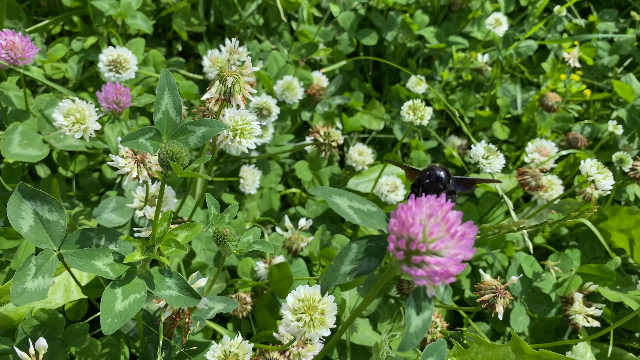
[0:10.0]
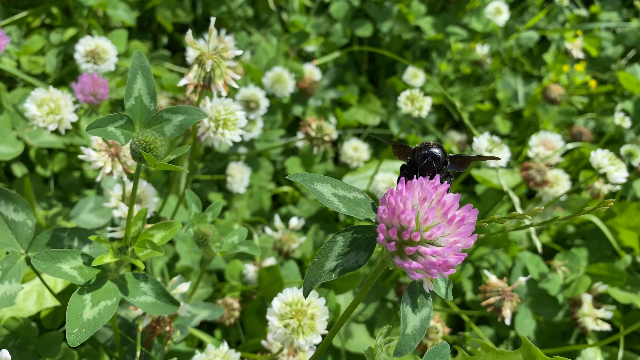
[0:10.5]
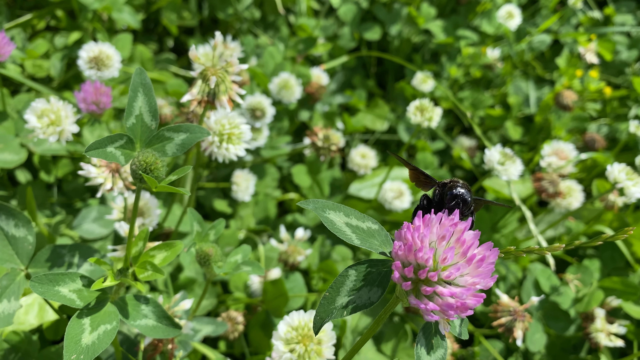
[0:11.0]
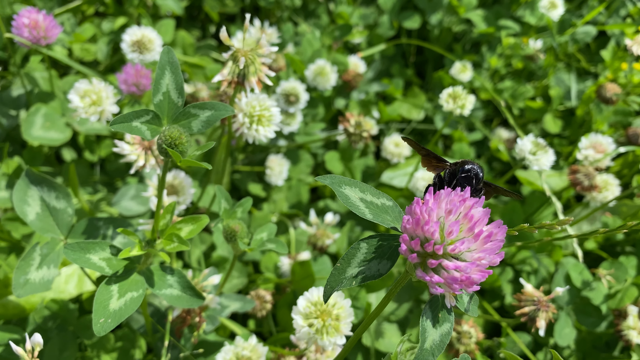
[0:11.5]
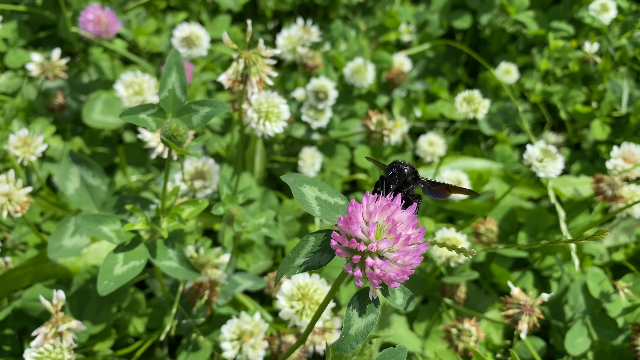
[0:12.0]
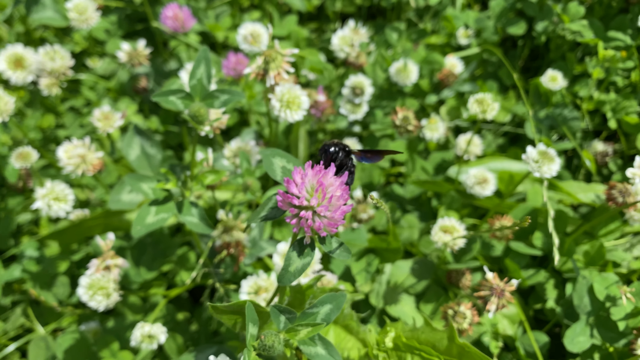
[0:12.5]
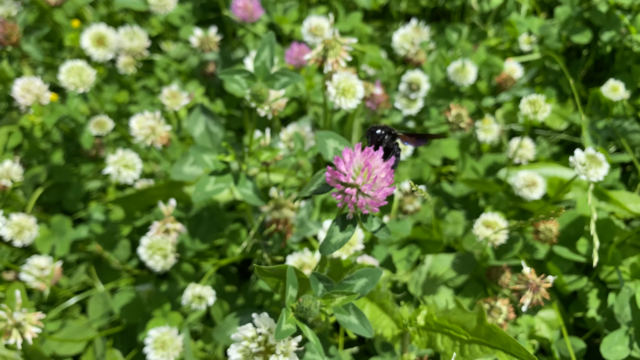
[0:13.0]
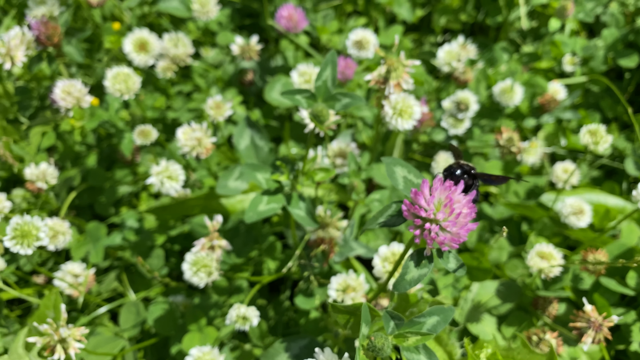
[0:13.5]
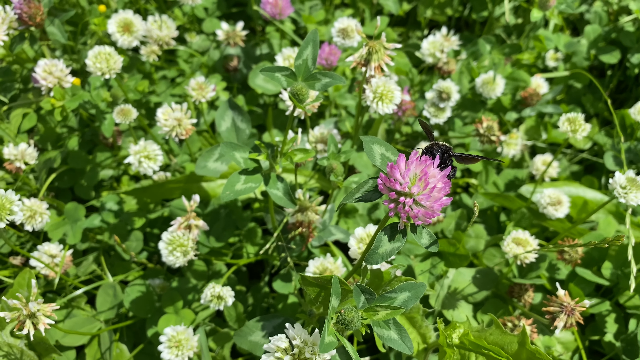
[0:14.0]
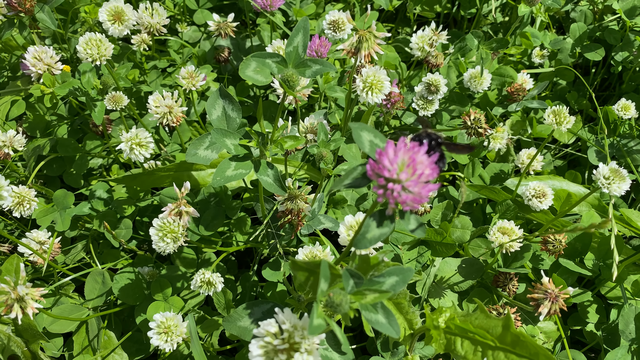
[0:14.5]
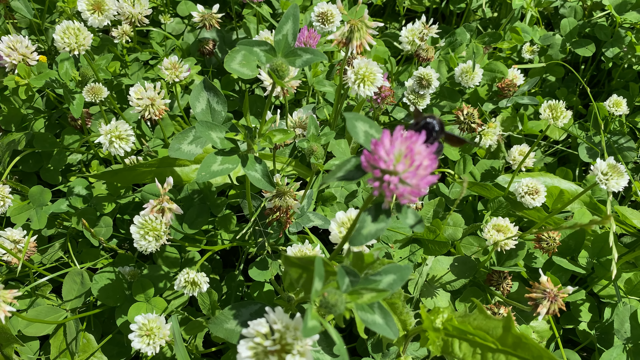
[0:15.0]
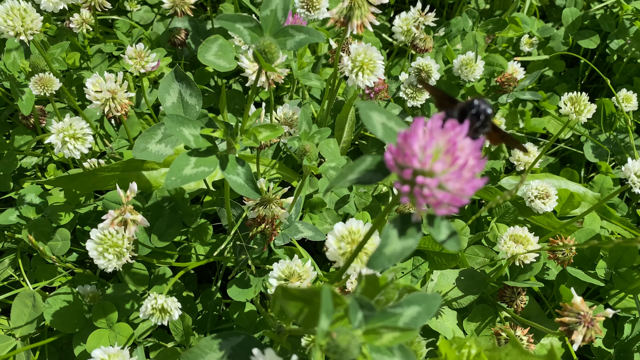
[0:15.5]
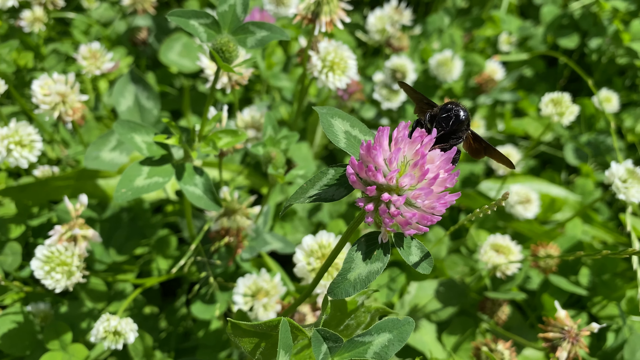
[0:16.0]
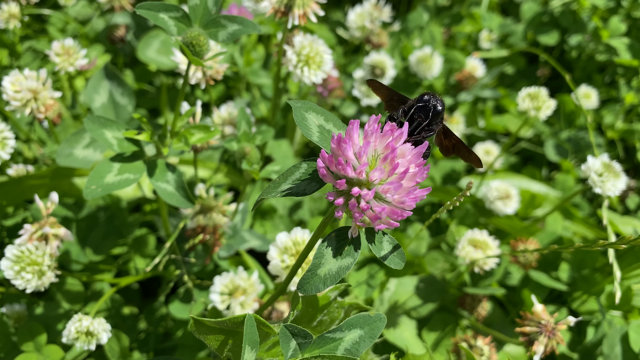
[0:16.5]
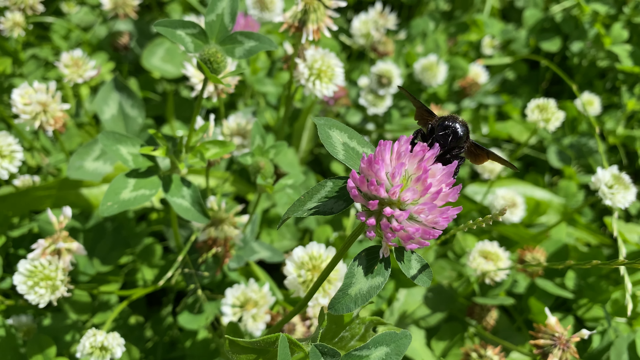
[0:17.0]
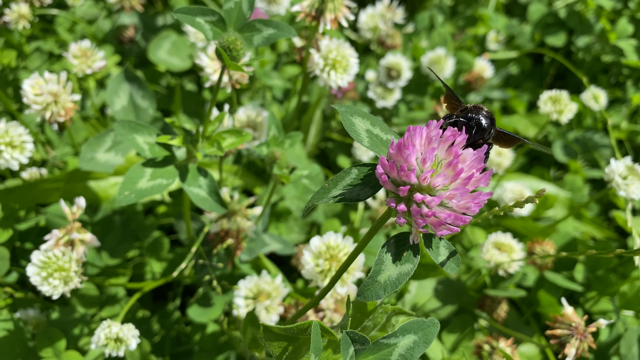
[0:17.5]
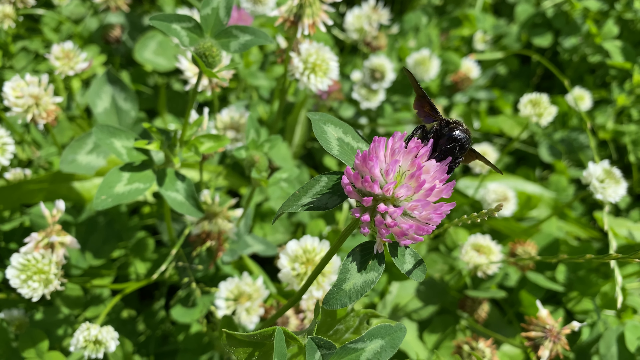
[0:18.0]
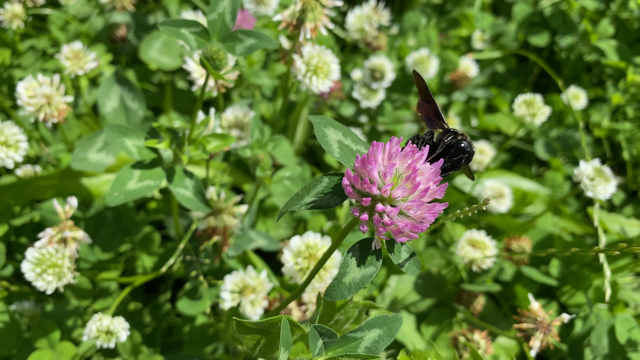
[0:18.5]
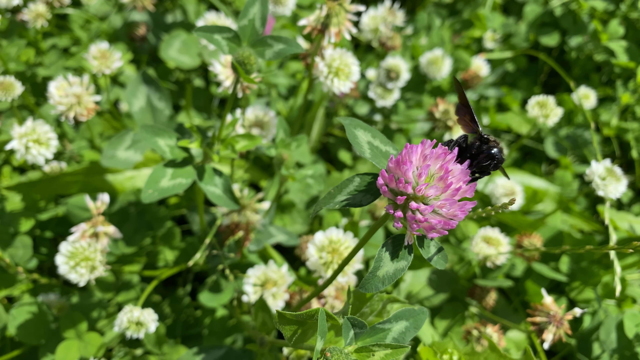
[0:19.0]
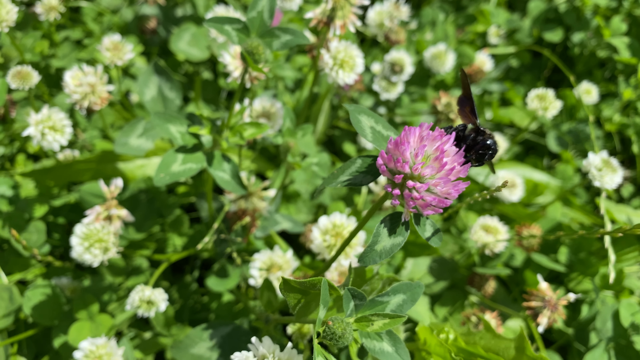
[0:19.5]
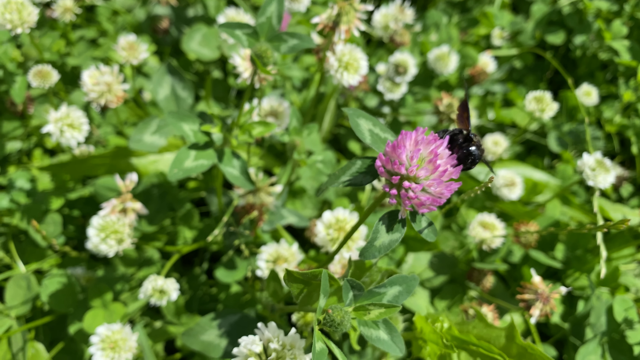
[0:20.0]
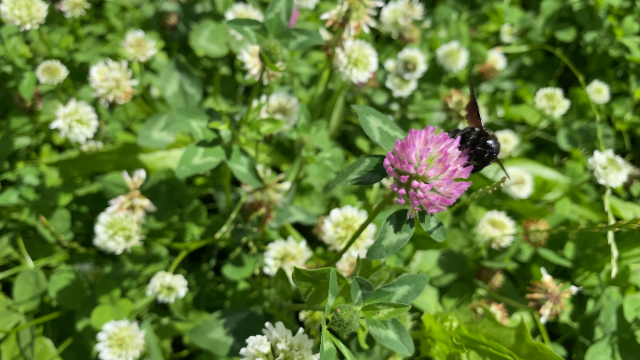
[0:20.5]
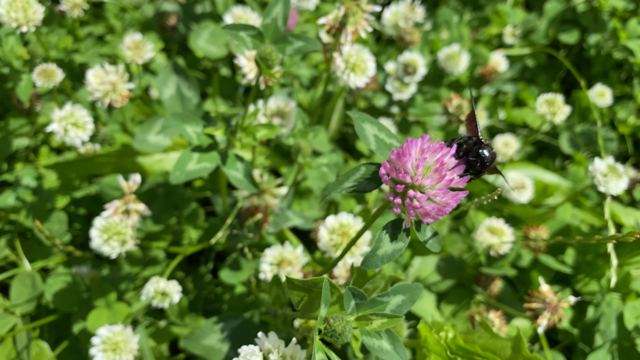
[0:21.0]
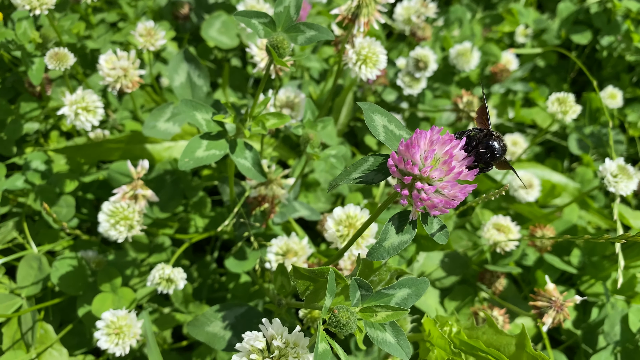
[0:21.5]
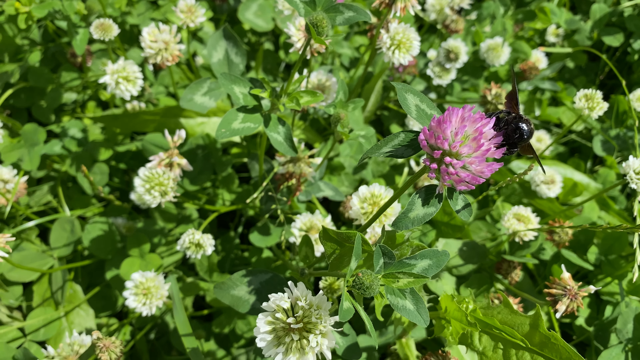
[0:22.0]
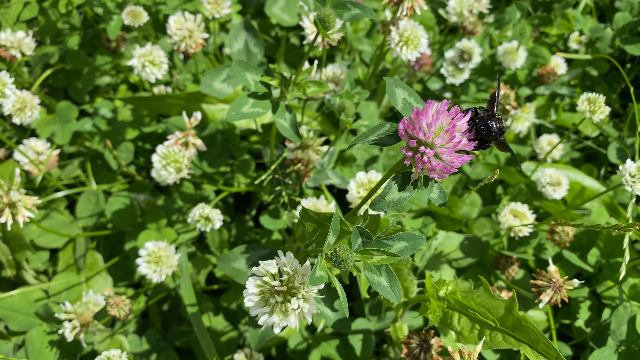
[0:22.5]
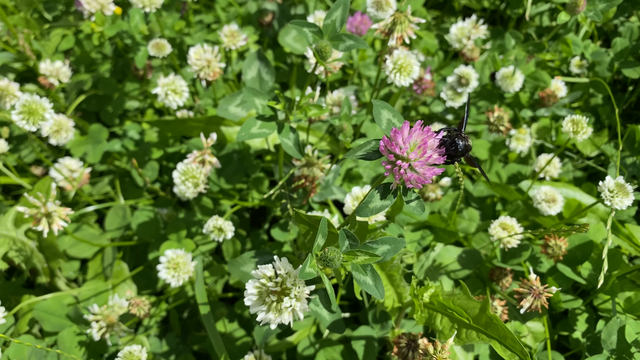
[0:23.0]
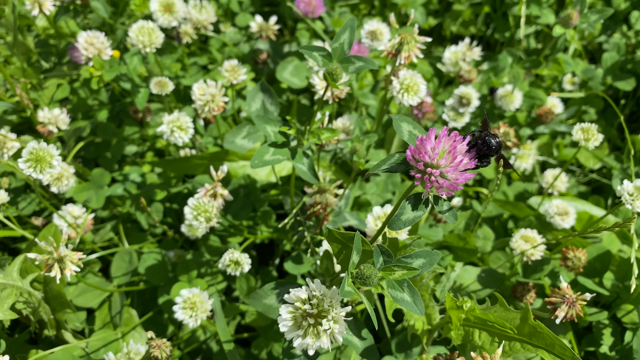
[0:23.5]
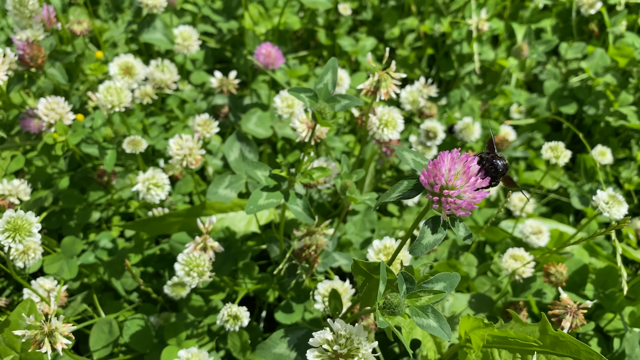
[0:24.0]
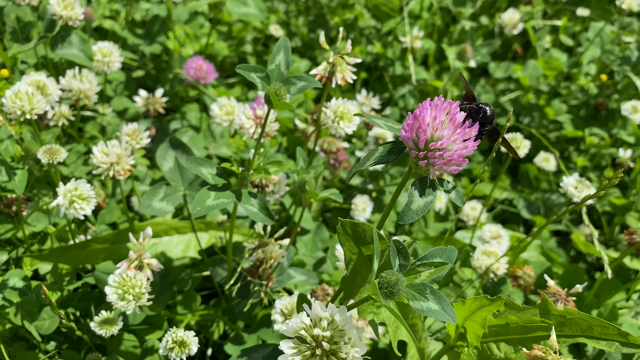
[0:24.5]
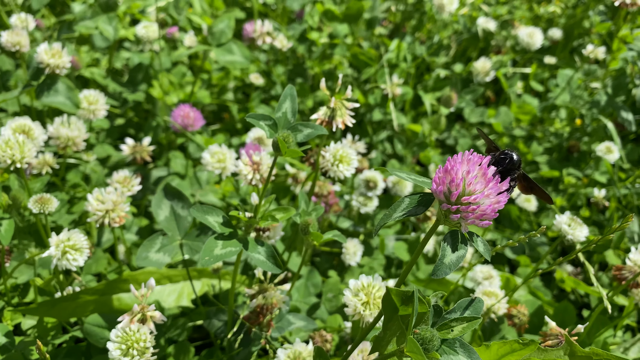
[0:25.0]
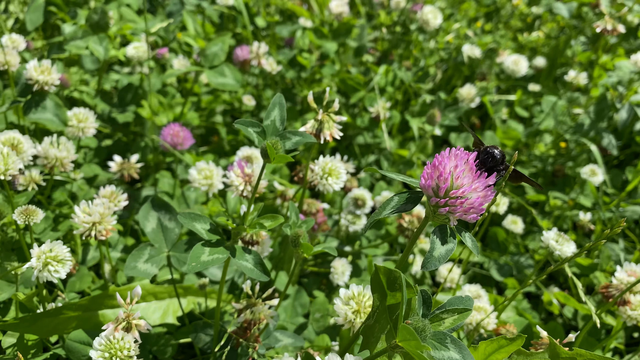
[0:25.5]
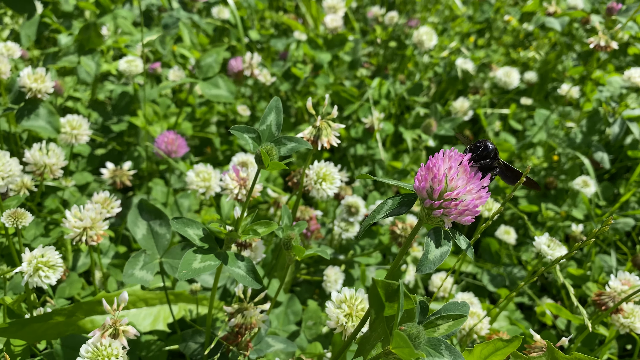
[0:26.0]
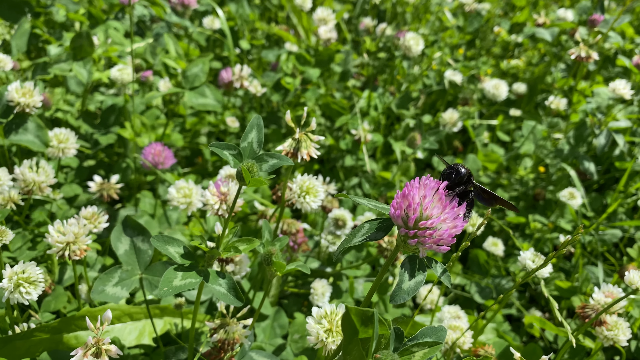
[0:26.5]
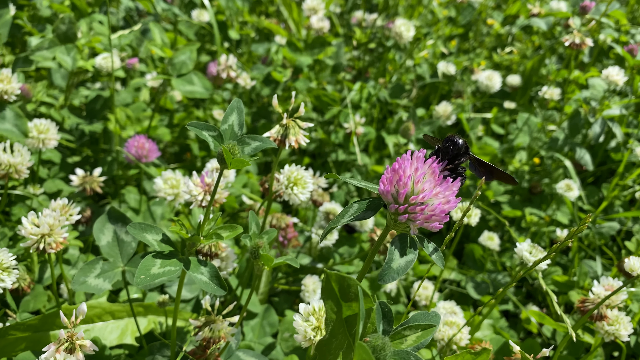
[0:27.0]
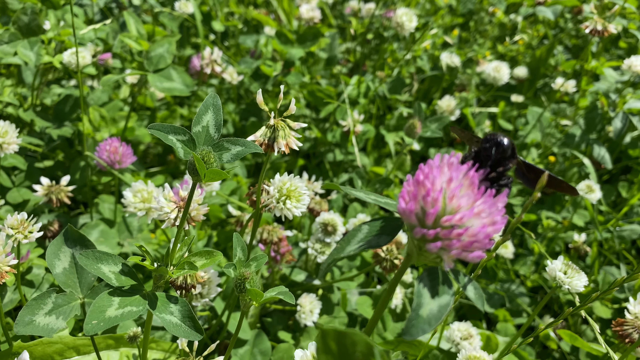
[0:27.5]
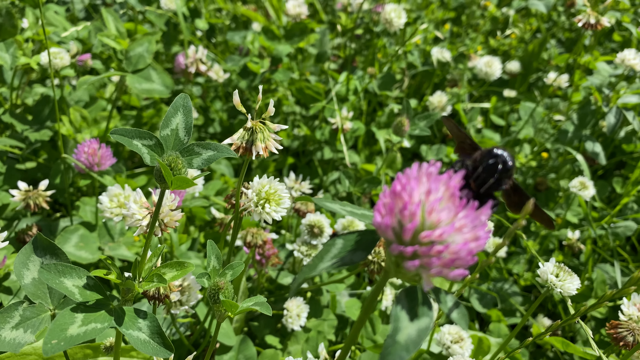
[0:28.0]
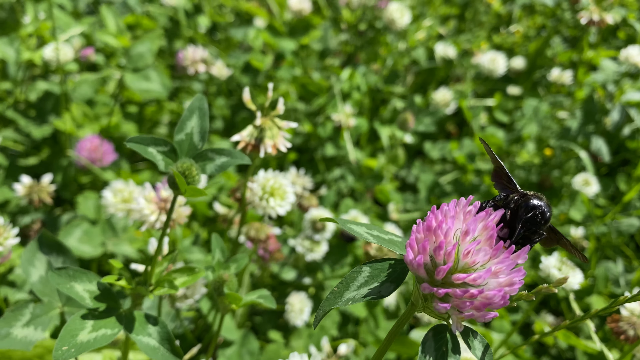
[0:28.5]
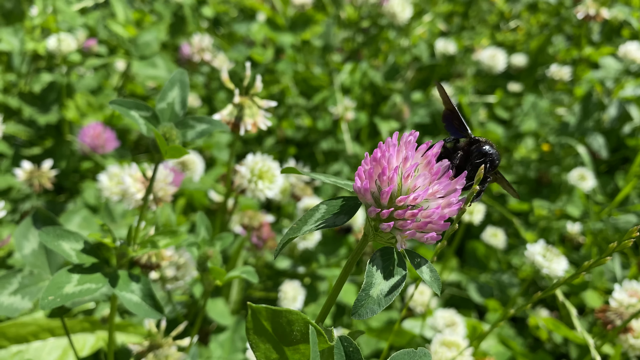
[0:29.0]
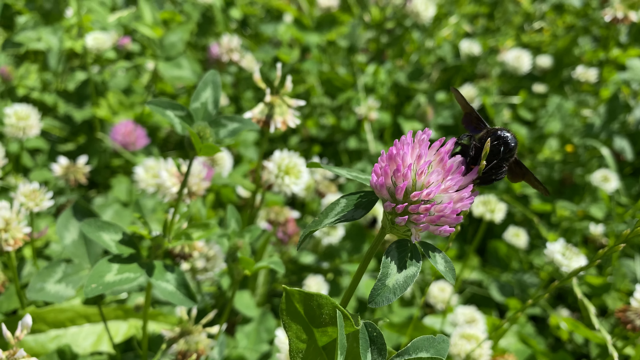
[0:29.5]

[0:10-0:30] The bumblebee is feeding on a purple flower in the wildflower garden. The purple flower looks more mature than the others: it is a medium purple color and has budded out much larger than the other flowers, which are white with yellow centers. The bee is mostly black, with a black body and black wings, though there possibly is some yellow on its rear end. The wind appears to be blowing slightly, the sun is shining brightly, and the leaves and stems of the wildflowers are a deep green. The garden looks very healthy.